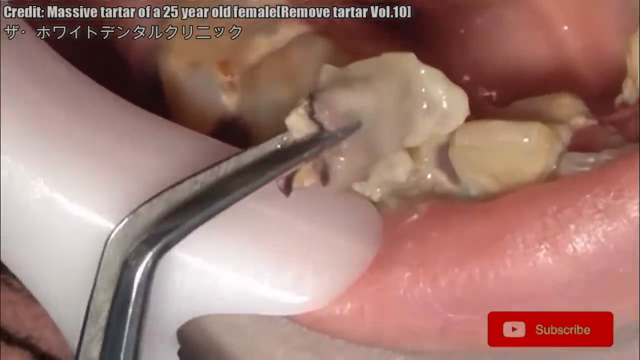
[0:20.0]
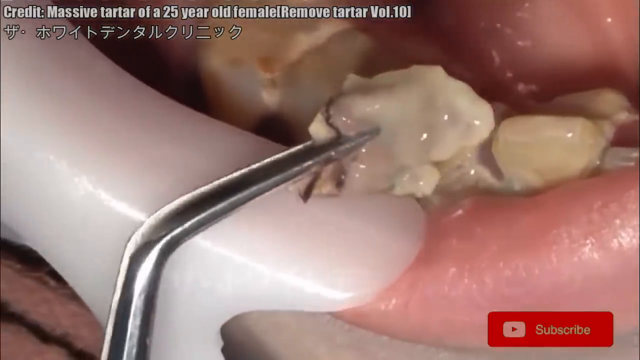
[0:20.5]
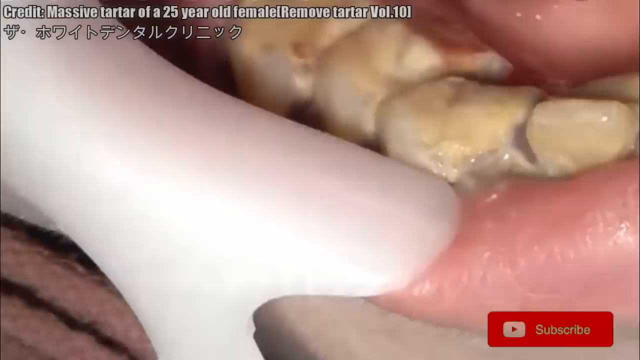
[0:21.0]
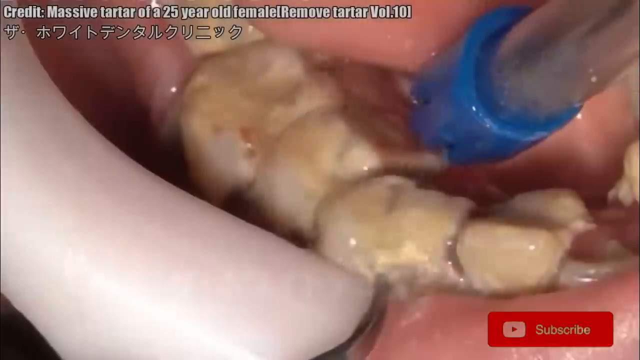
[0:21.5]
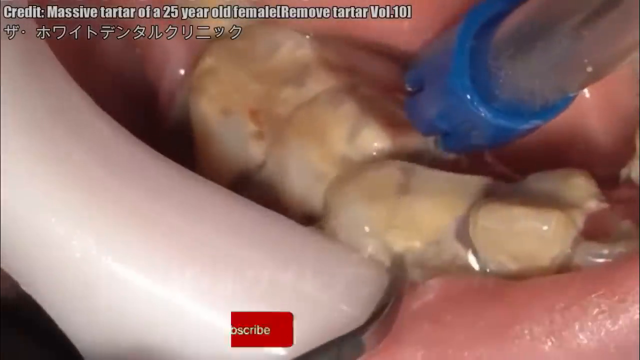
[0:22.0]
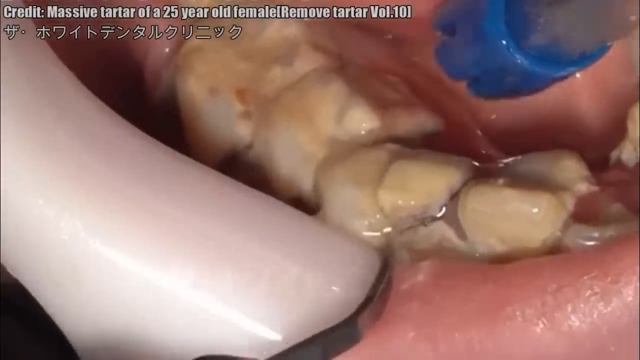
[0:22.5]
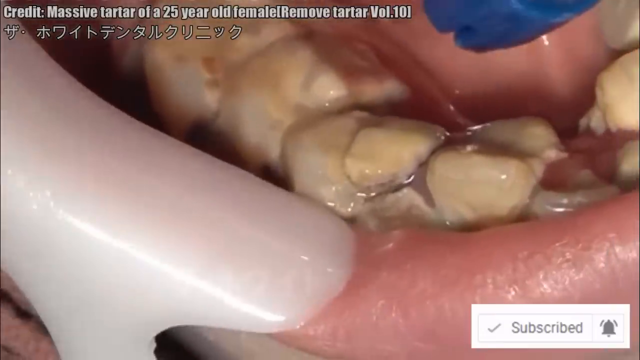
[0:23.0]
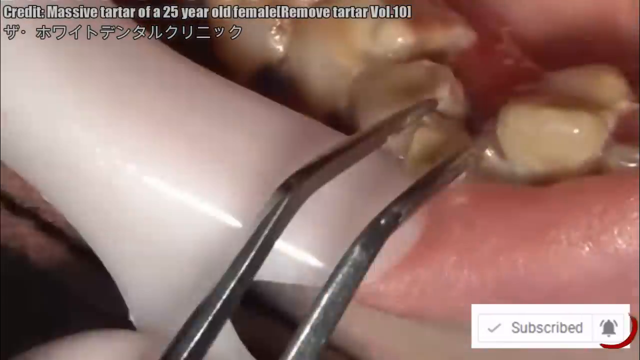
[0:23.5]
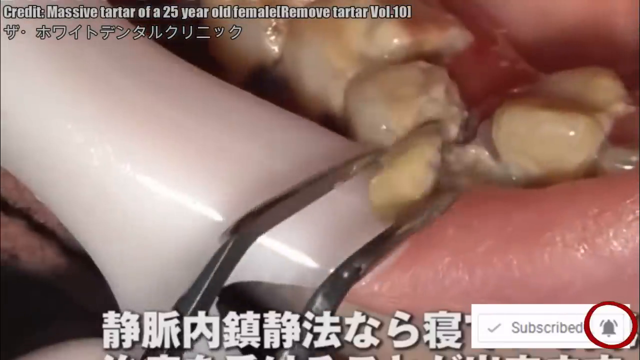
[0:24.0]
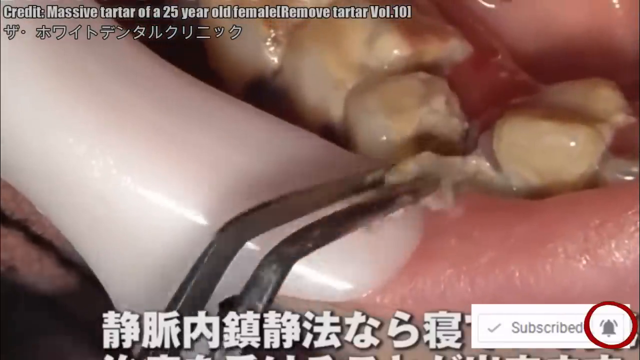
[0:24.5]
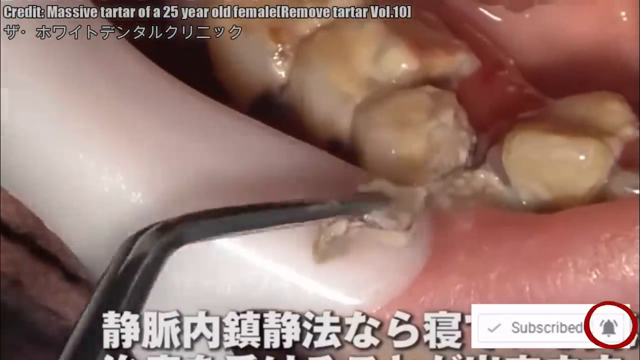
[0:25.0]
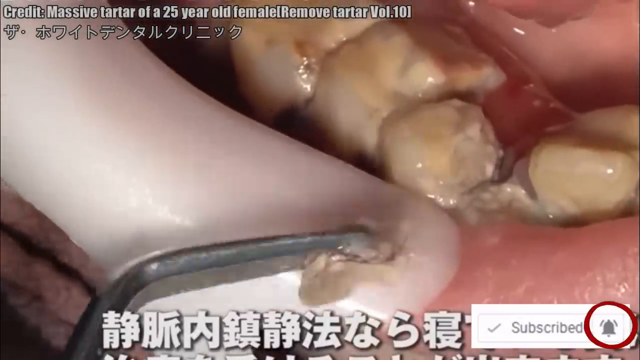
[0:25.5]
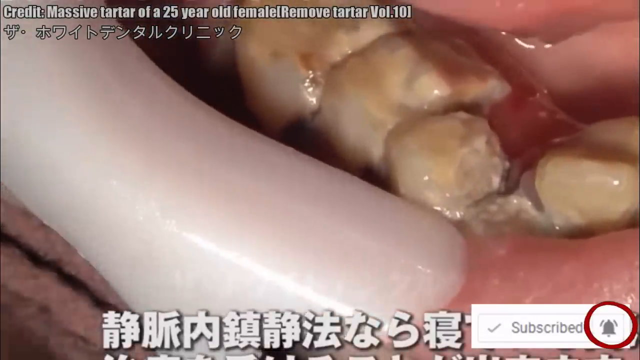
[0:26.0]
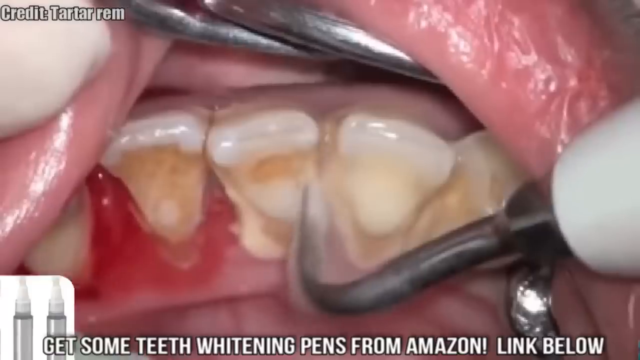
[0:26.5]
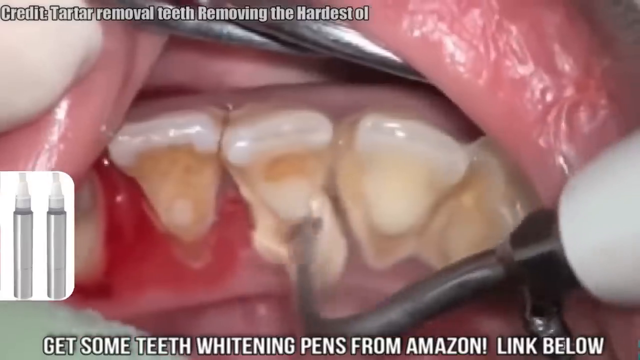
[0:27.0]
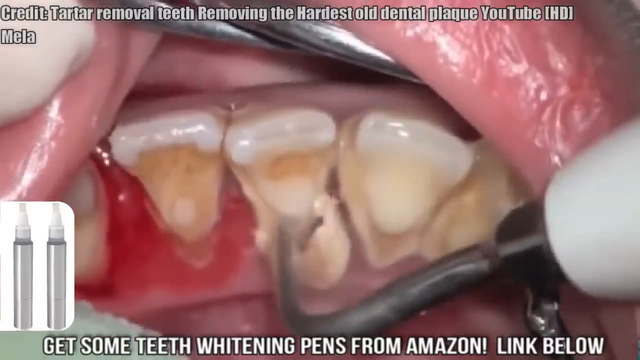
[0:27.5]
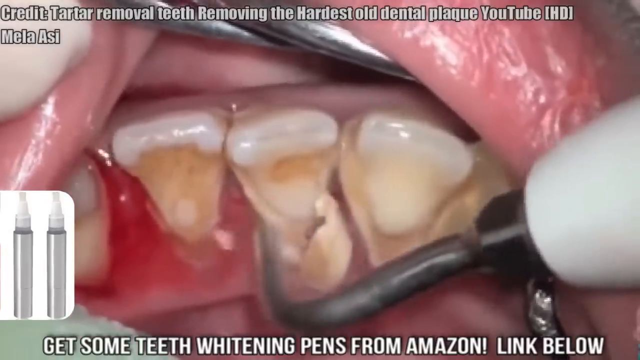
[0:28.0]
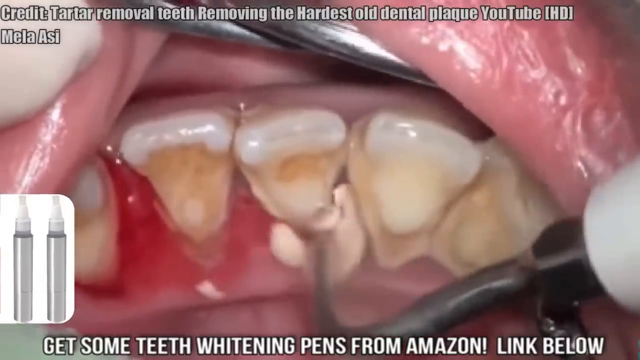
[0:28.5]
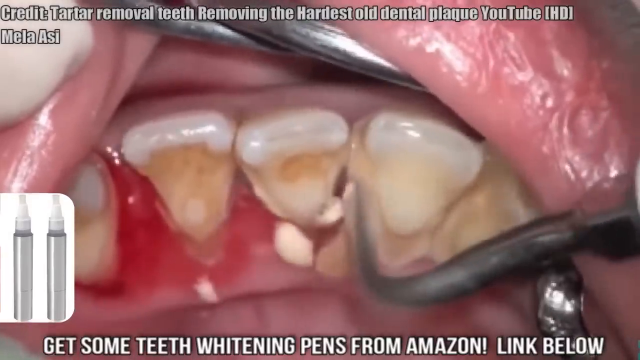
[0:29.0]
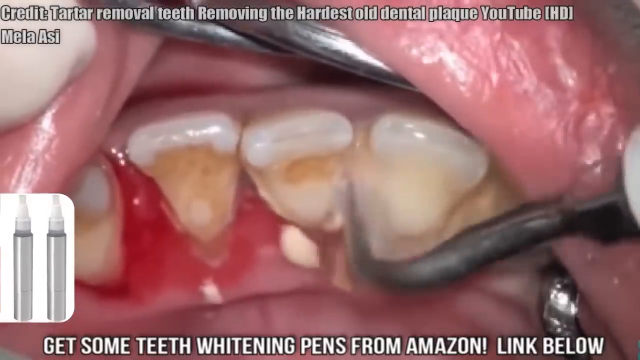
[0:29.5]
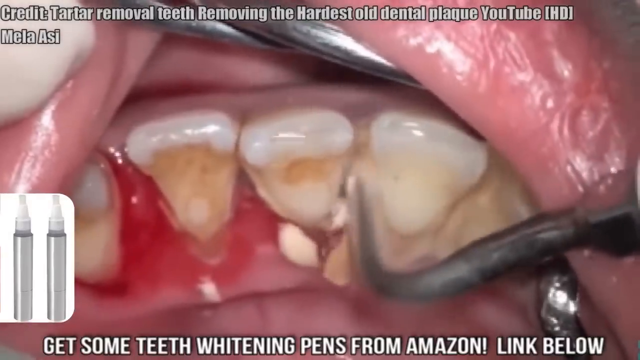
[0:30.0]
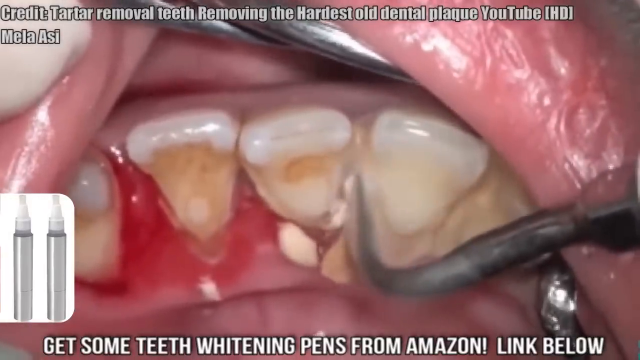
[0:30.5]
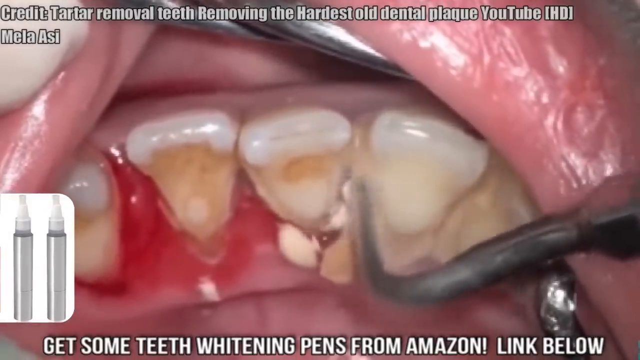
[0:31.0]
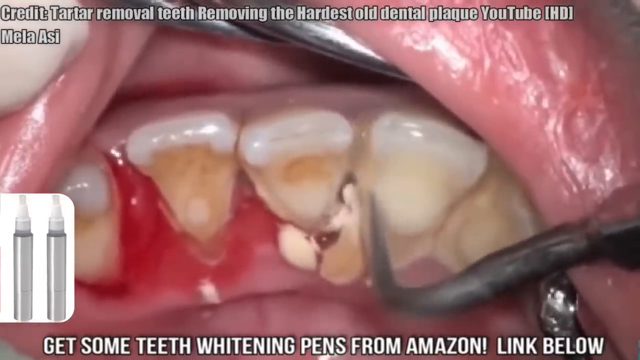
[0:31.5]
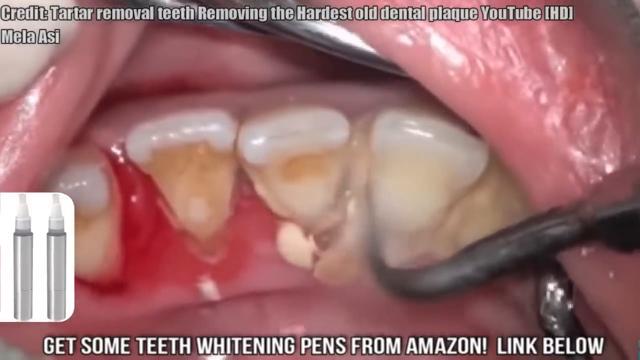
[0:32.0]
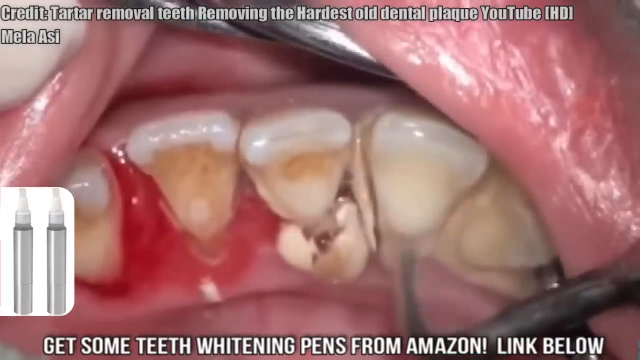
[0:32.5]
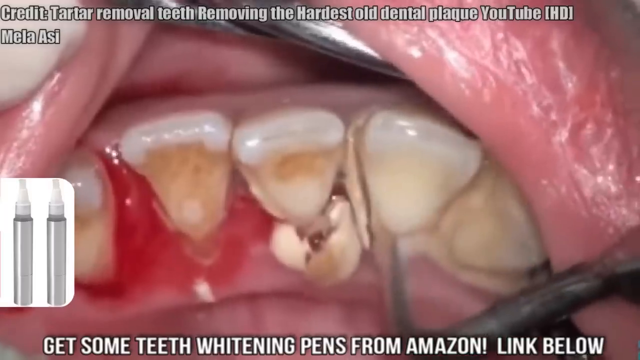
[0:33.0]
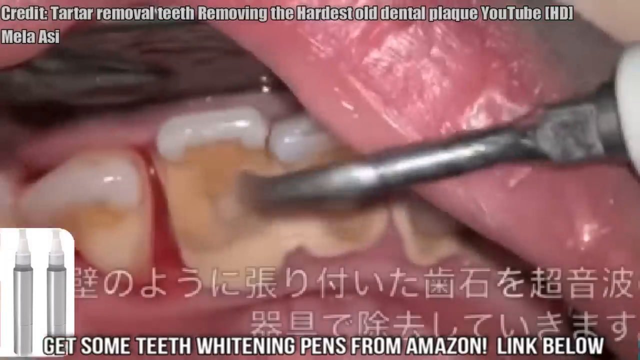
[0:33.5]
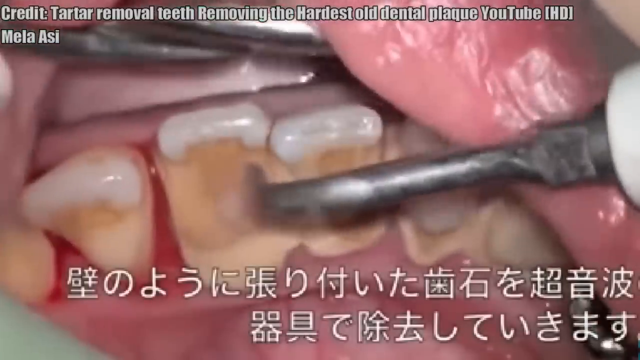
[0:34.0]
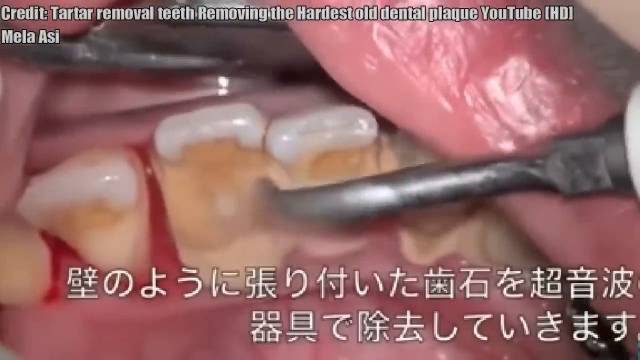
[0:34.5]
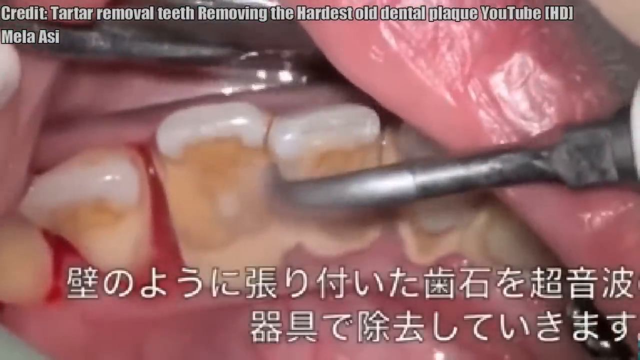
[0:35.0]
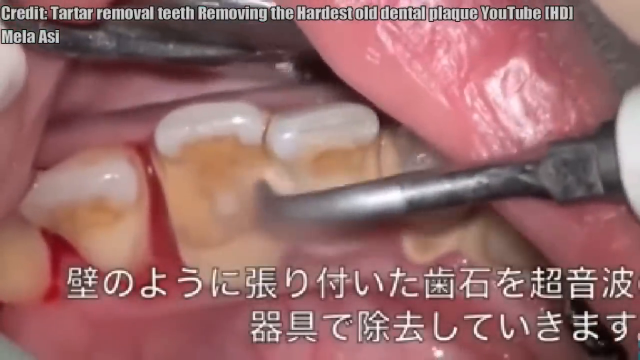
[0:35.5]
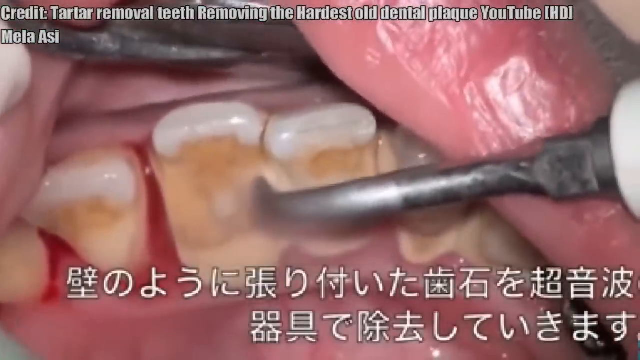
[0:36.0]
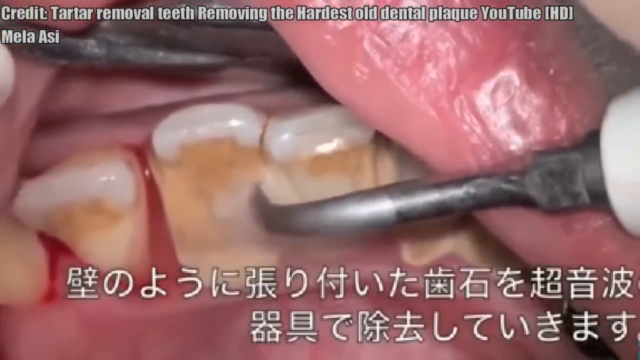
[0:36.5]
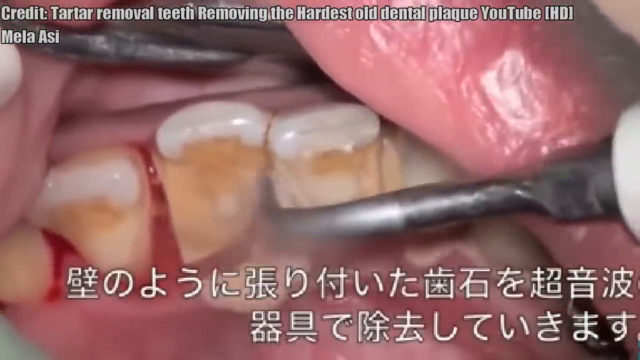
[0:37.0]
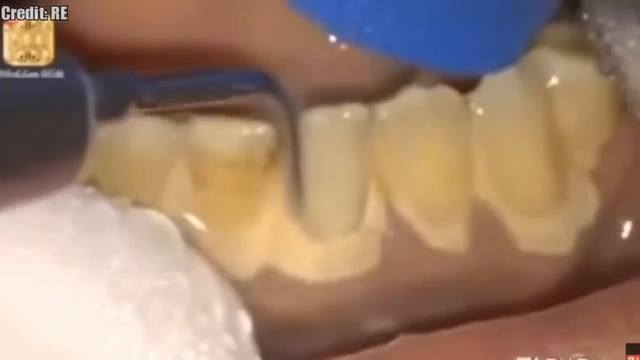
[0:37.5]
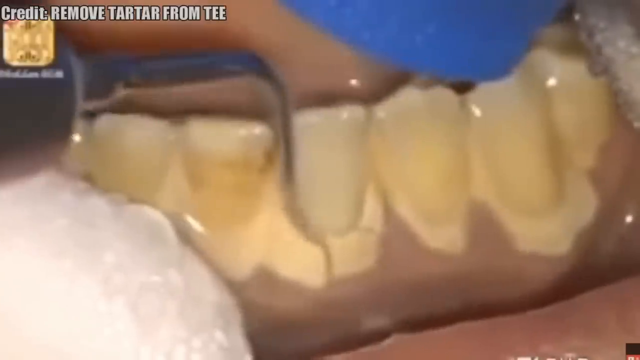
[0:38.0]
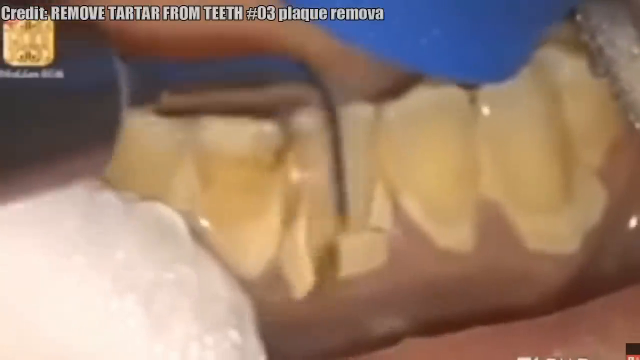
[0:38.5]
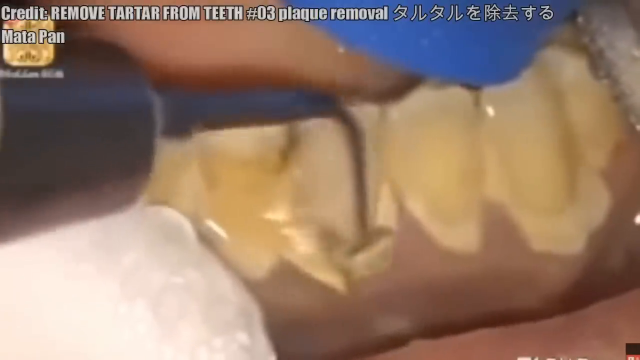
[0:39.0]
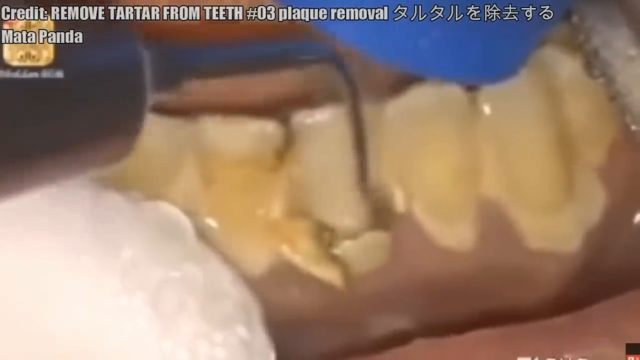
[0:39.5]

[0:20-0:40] Large pieces of tartar are removed from a mouth. At the top of the screen is a caption in English, with text underneath in Chinese or a similar language; it reads "credit massive tartar of a 25-year-old female, remove tartar volume 10." The mouth is held open by a long piece of white plastic placed on top of the lips and at the side of the mouth. A large metal tweezer extracts large scales of tartar, and a water jet helps release the tartar from the tooth surface. More captions in Chinese appear underneath, along with a subscribe button. Another image shows tartar being removed from behind the back bottom teeth. An advertisement for teeth whitening pens appears on the left side of the screen, with a link below for the pens. Blood comes out from between the teeth as the tartar is removed.